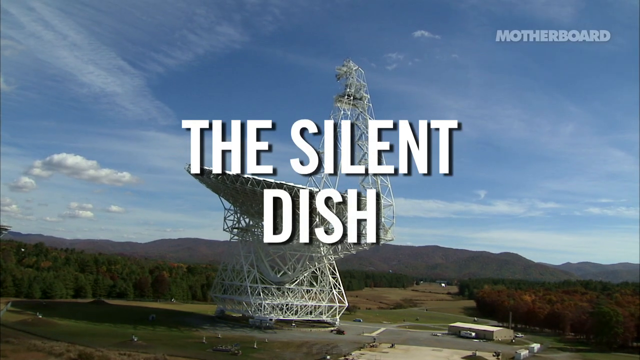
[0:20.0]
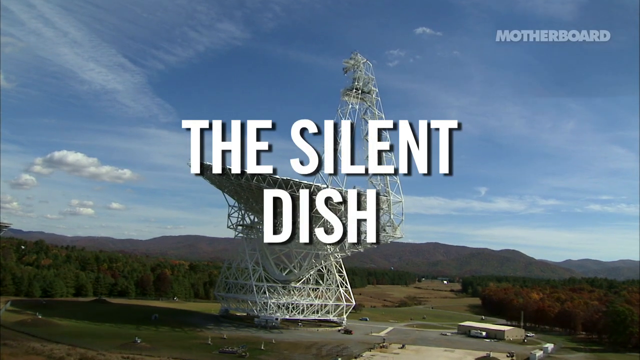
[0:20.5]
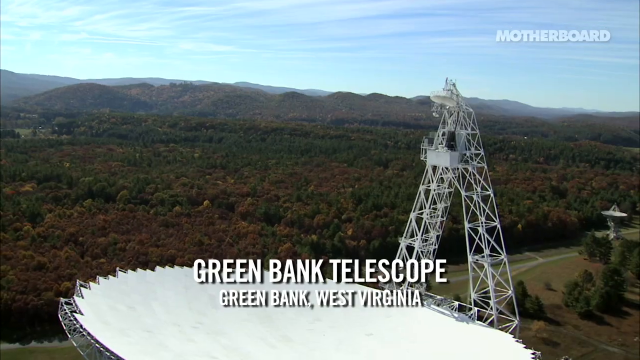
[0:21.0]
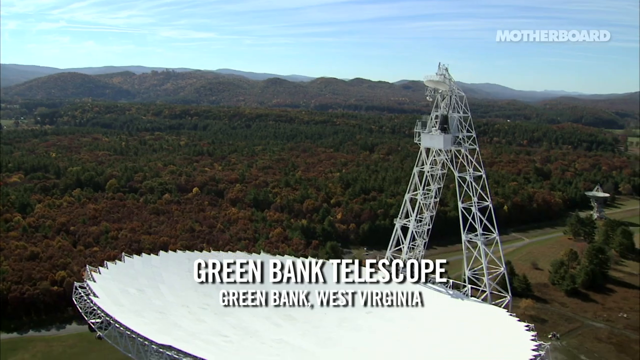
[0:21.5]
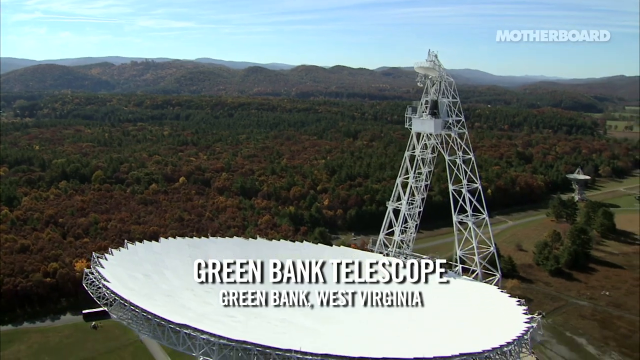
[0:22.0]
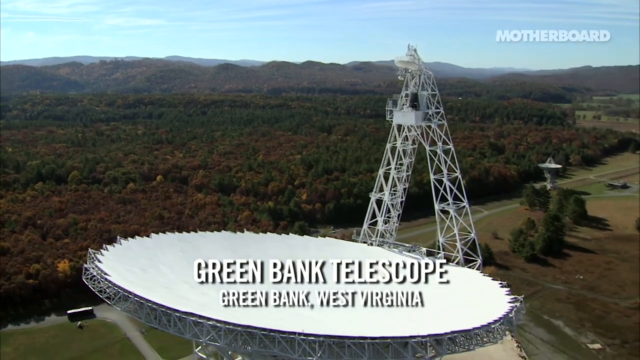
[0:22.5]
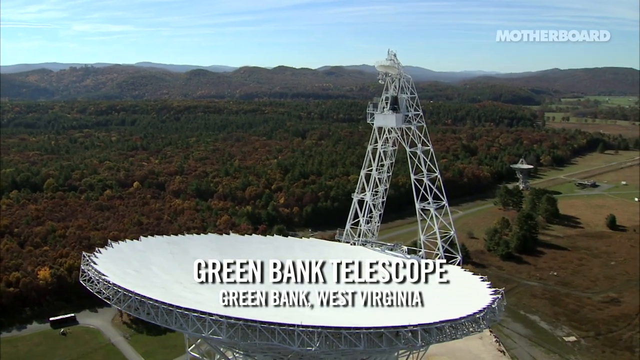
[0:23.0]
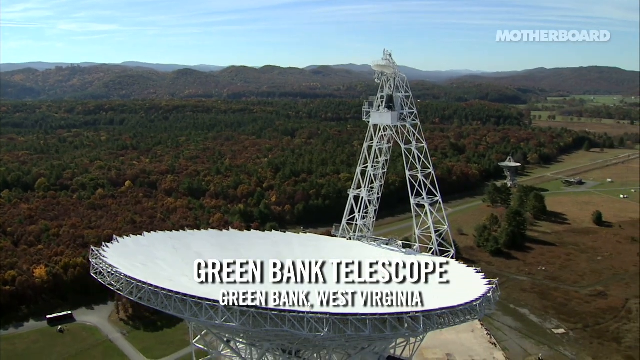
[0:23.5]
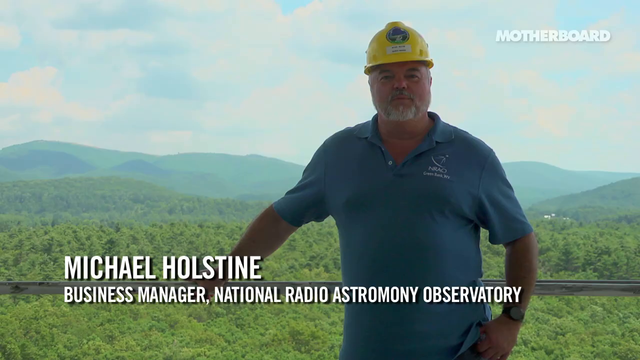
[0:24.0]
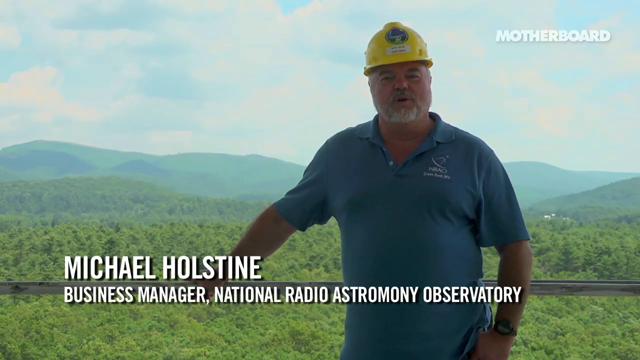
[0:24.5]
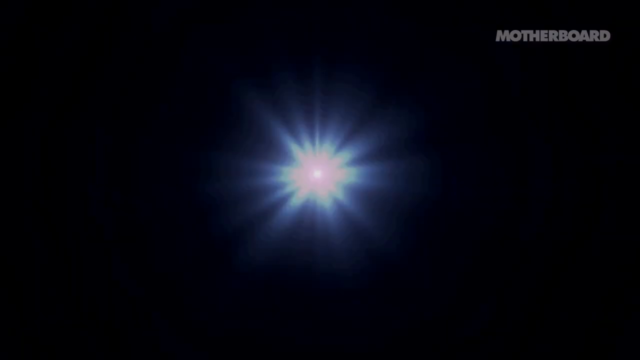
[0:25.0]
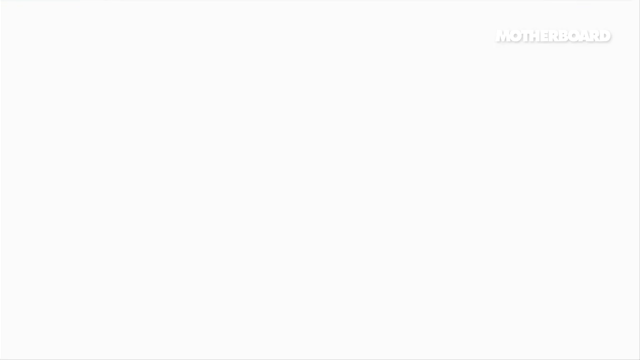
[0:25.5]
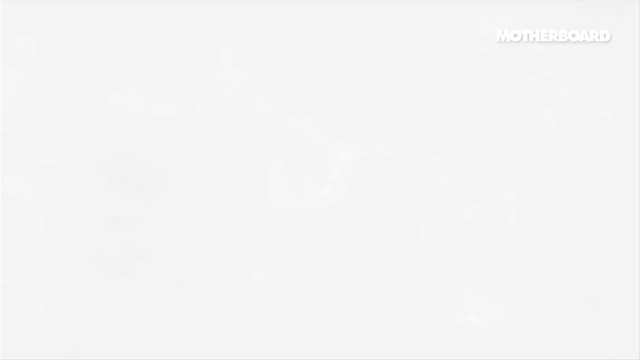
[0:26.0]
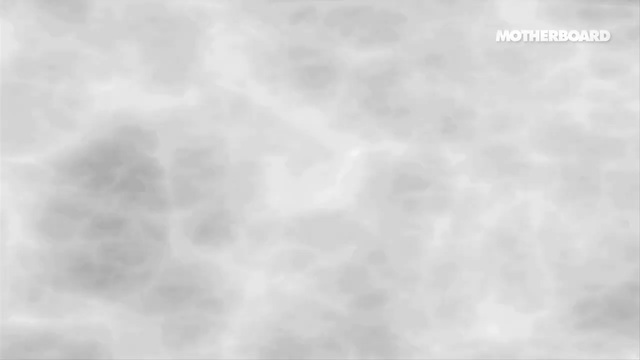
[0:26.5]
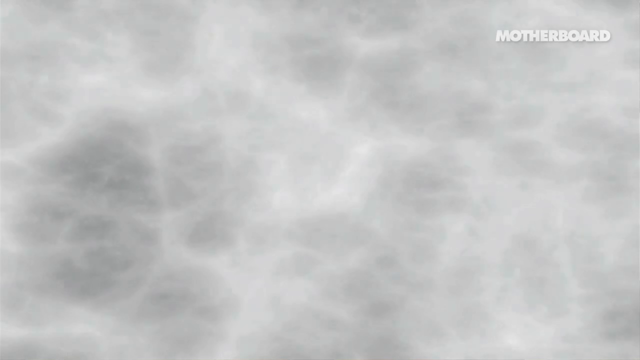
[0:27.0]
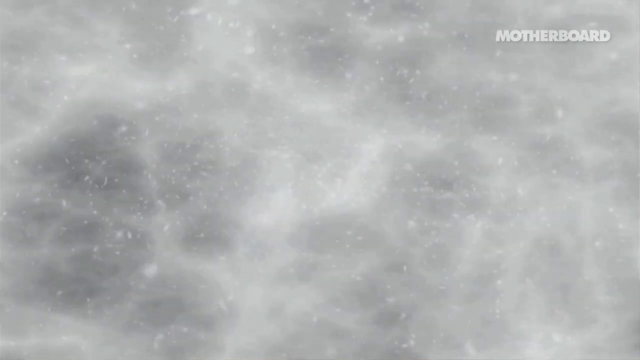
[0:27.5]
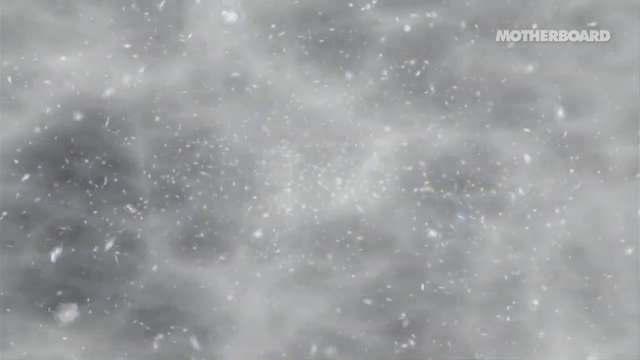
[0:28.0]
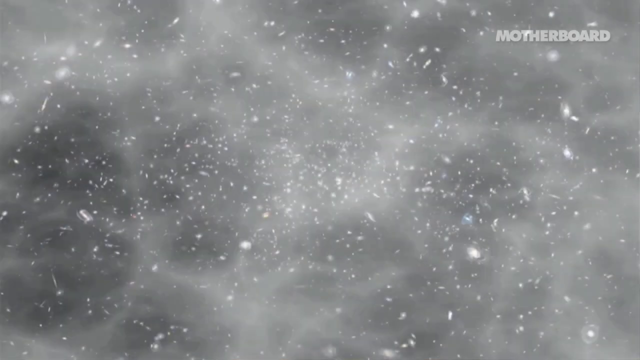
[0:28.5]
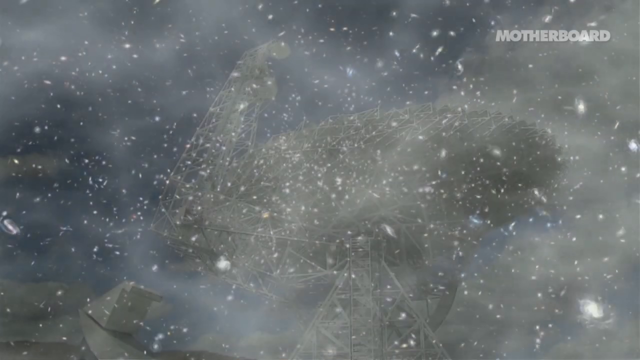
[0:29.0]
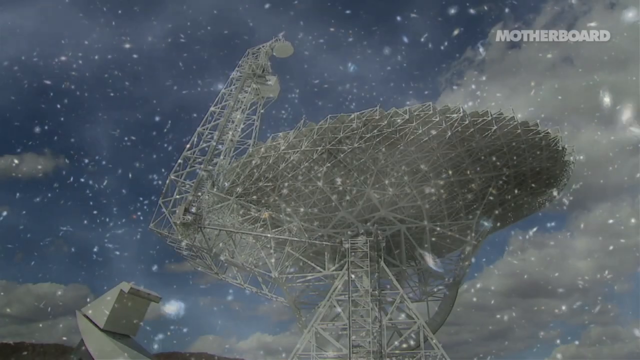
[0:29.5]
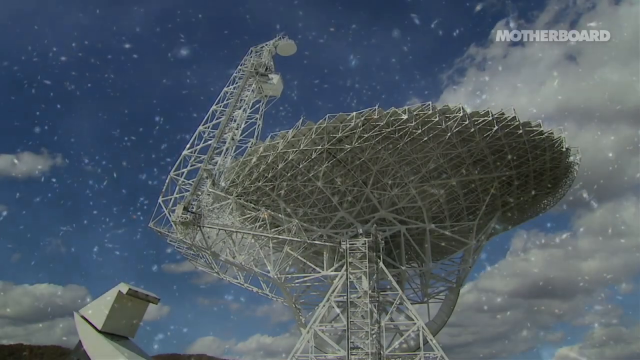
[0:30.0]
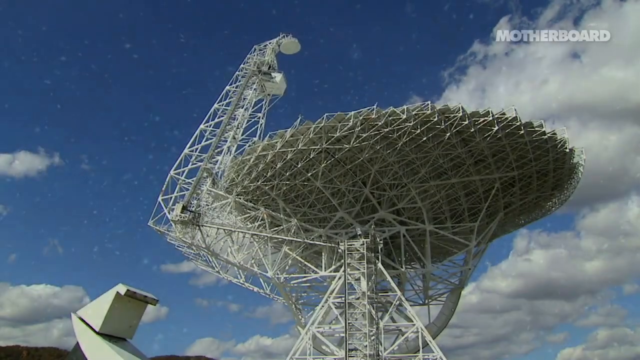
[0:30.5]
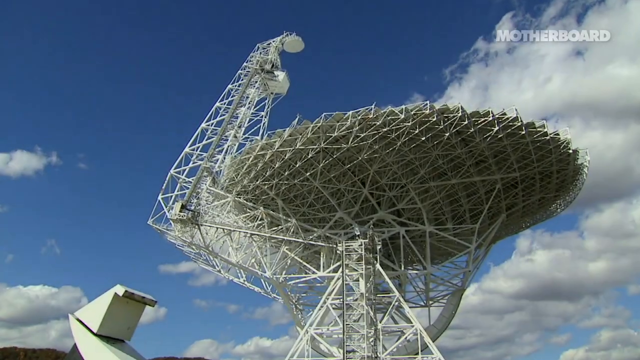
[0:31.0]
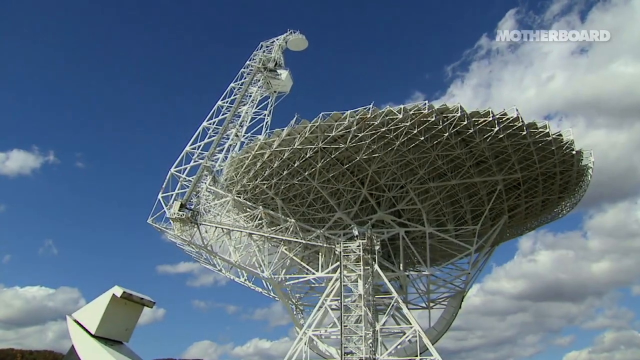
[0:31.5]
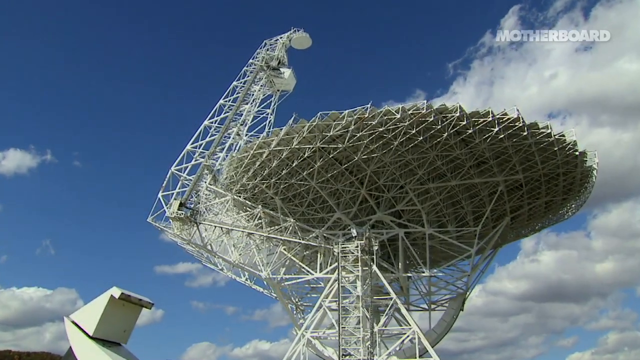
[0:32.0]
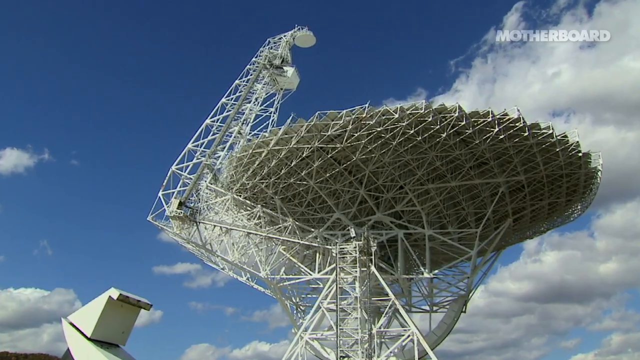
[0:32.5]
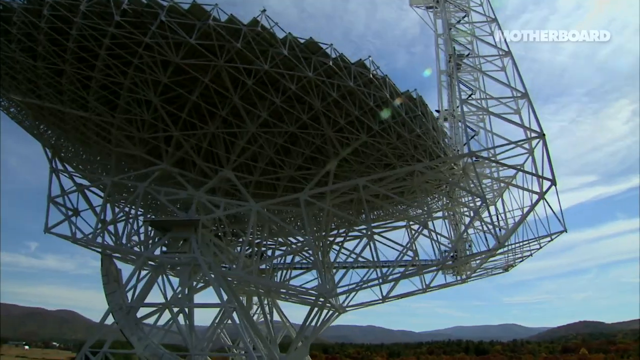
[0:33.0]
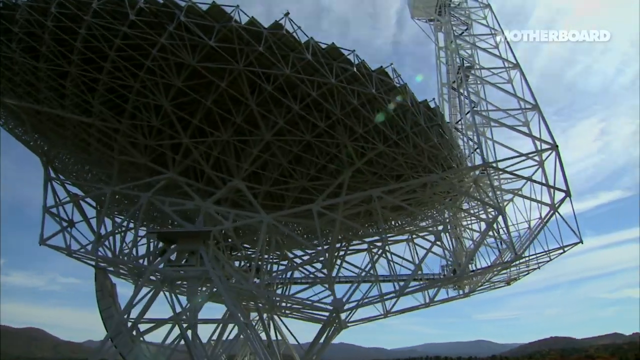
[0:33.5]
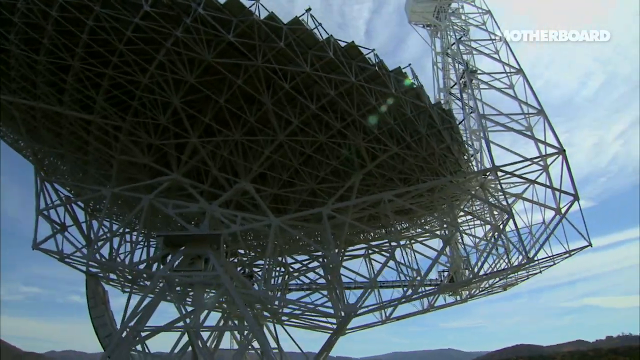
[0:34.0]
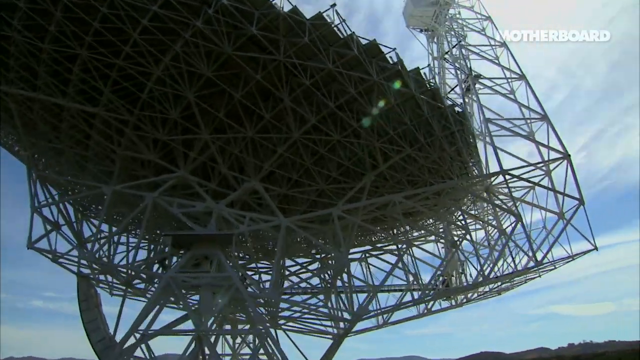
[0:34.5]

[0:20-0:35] An outdoor image shows a large satellite dish with "The silent dish" written in white text across the front. The camera pans out to show more of the vast expanse of land, revealing the entire massive satellite dish, which is round with an antenna pointed upward. Next, a man stands wearing a yellow hard hat and a light blue polo neck t-shirt. The location is written across the front of the dish: "Green Bank Telescope Virginia." The word "motherboard" is written in white in the upper right corner of the screen. Another view shows the dish against vast blue skies with white floating clouds, followed by a burst effect, like a burst of light, revealing what looks like lots of white shiny stars.